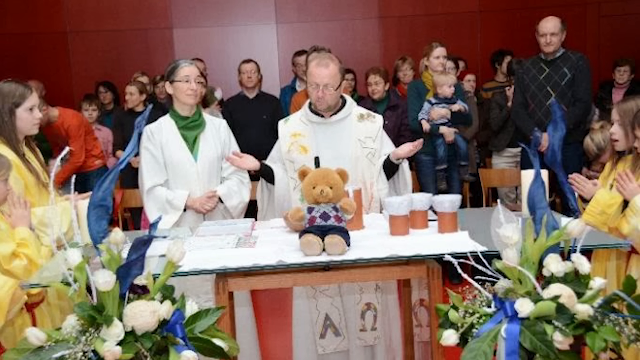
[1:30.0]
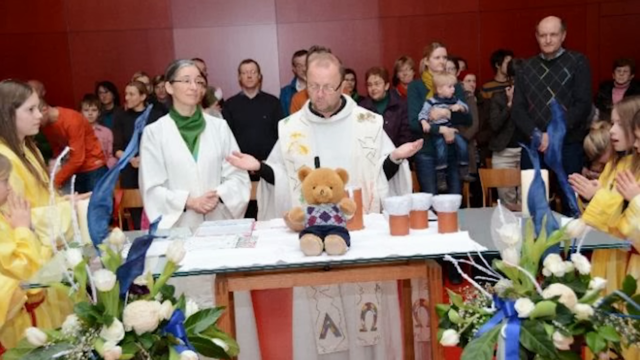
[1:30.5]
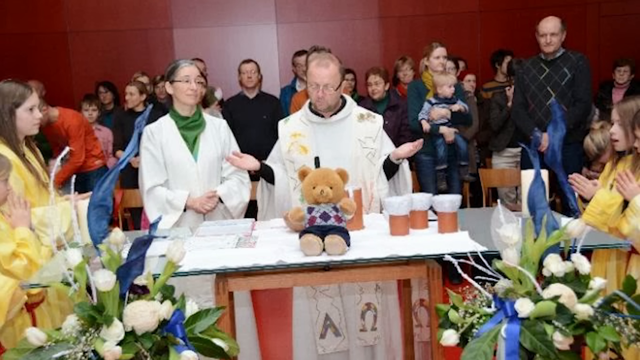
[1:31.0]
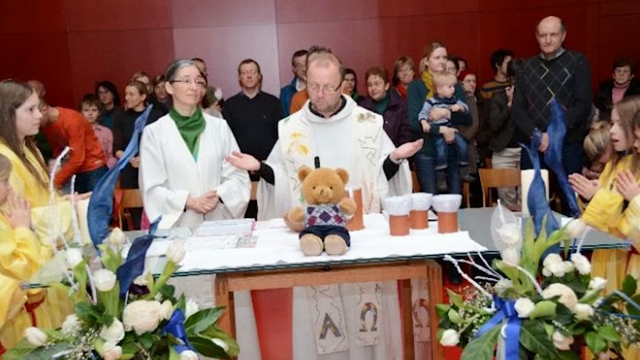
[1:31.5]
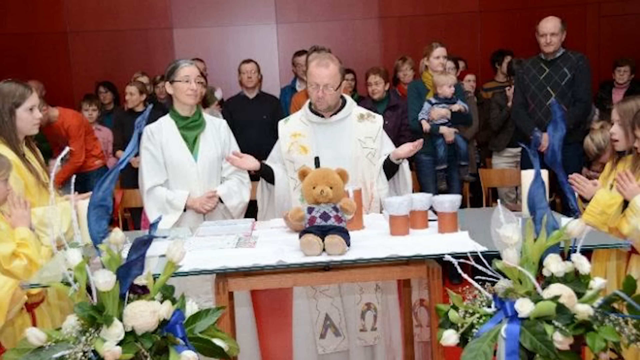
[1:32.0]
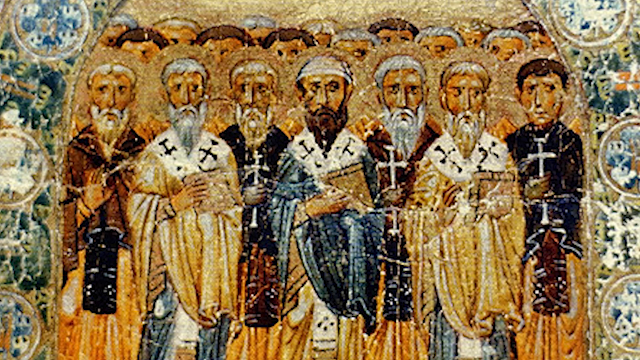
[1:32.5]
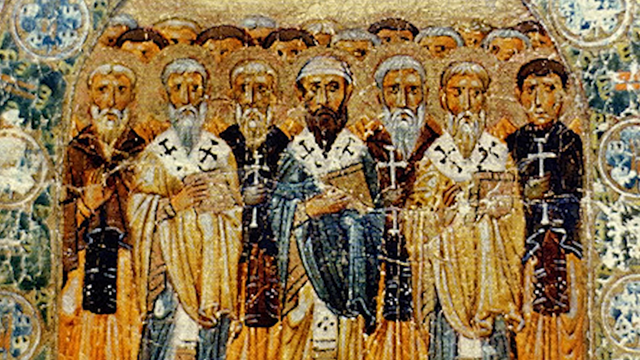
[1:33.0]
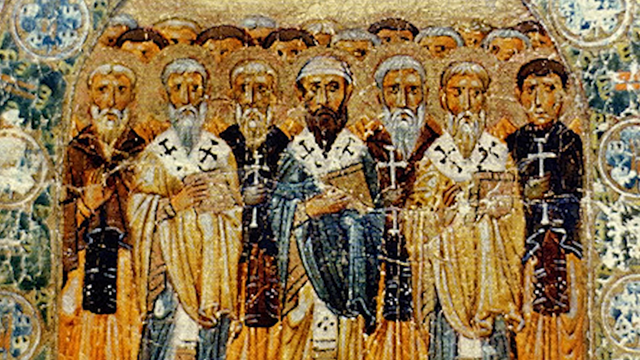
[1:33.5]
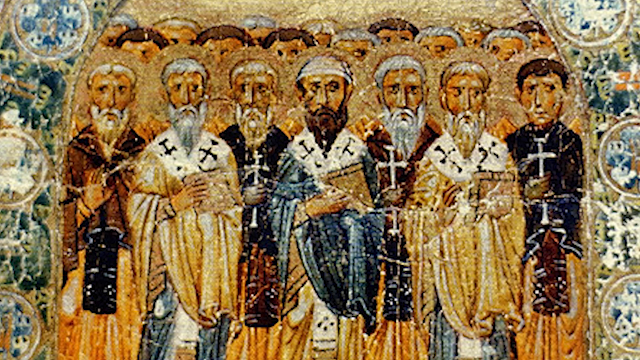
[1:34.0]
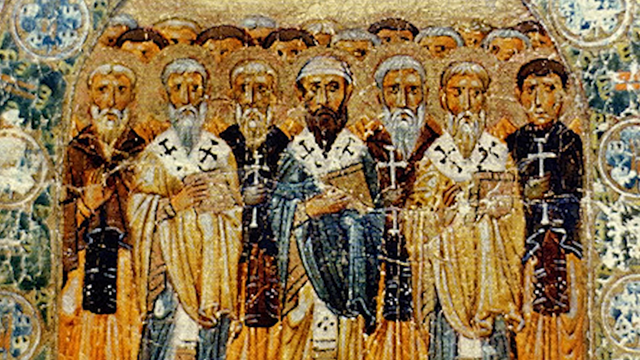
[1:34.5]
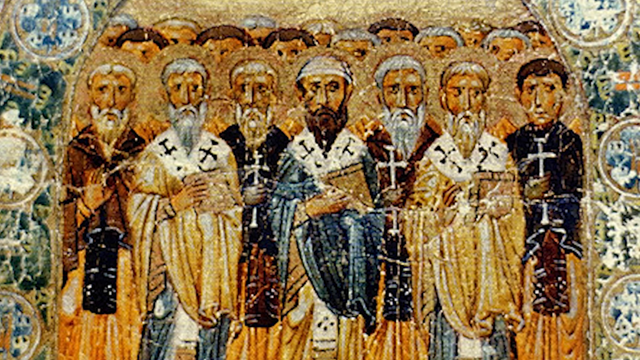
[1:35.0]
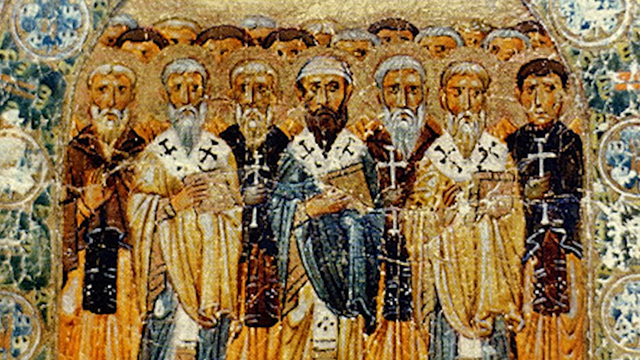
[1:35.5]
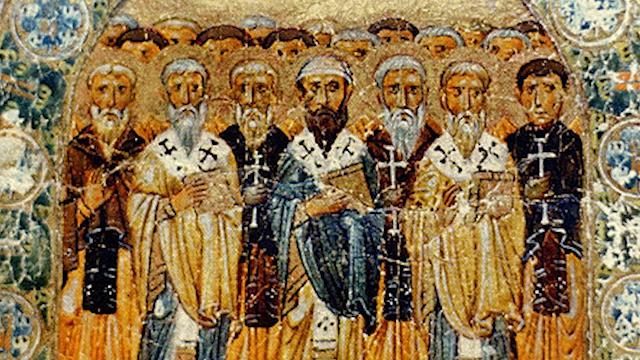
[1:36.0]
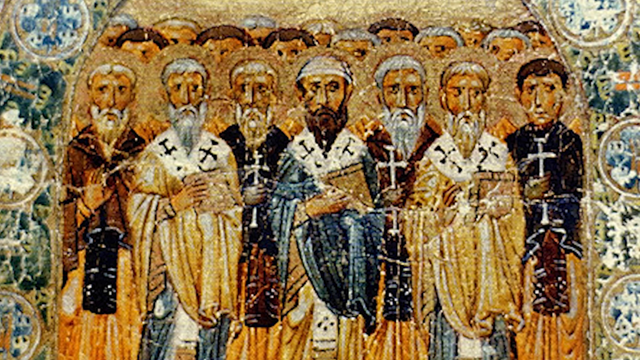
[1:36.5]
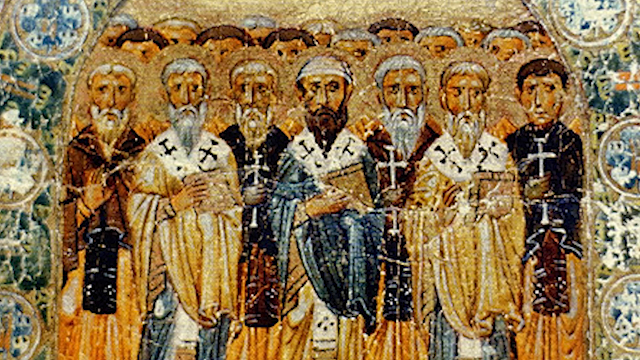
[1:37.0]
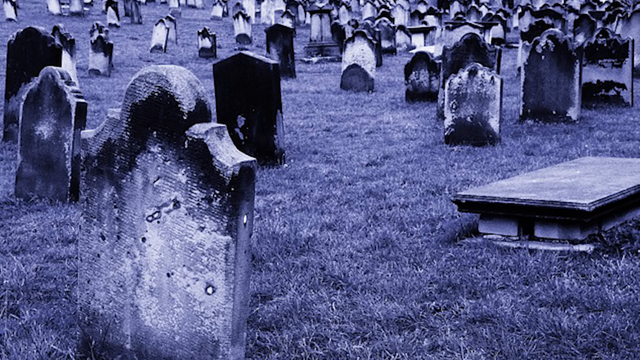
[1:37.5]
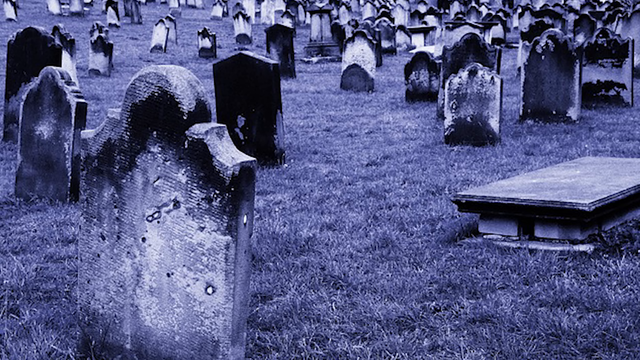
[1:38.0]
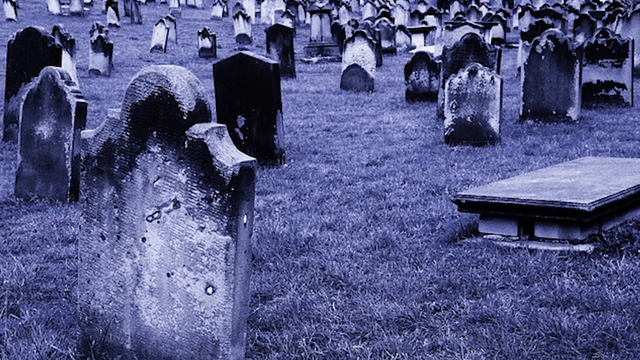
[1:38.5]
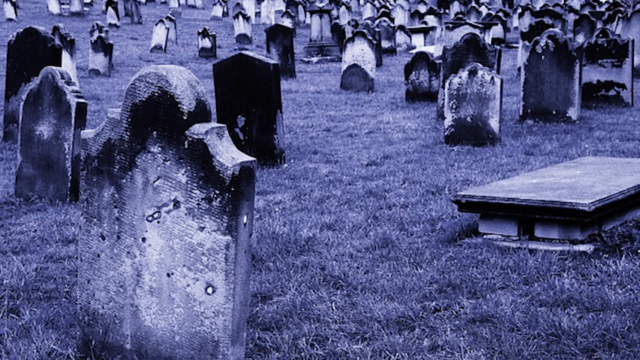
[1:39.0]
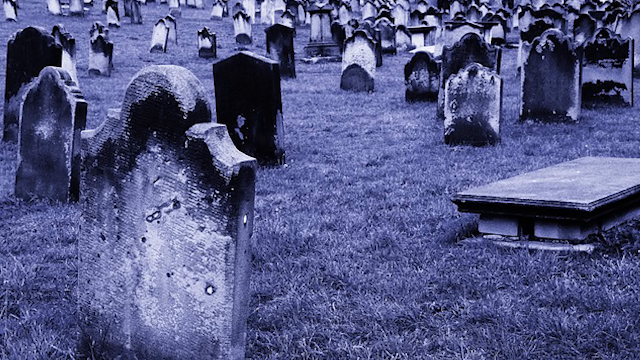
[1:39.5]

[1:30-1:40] A small, light wooden table has a larger piece of table on top of it, covered with a white tablecloth, and a teddy bear faces the camera. Behind the teddy bear, on the other side of the little table, a man is down on his knees. He wears a long-sleeved black shirt with a white robe over top of it, wears glasses, and has both hands out in front of him to the side. To his right is a woman in a white robe, with a green shirt visible at her neck. The table in front of him holds the teddy bear and some candles, and there are more people behind them, all facing the camera. The image cuts to an old picture of men in robes with crosses all over them, which looks like an old sketch. It then cuts to a black and white cemetery with a number of headstones.